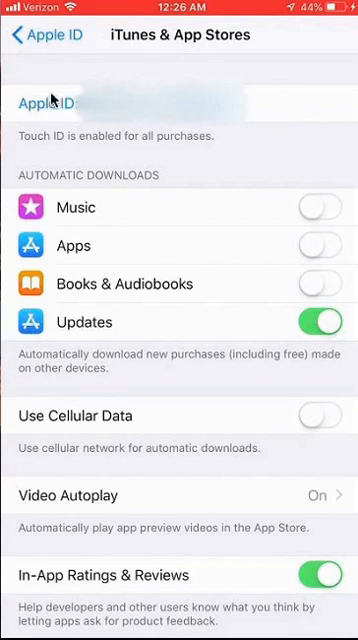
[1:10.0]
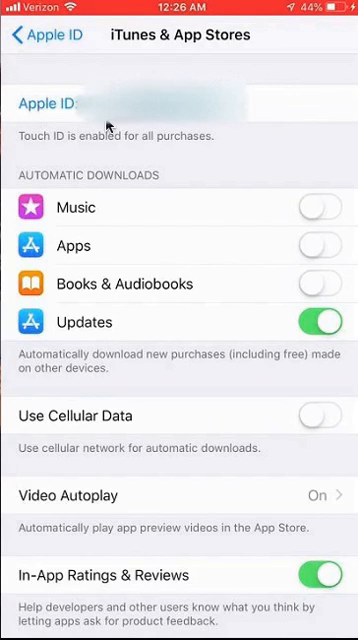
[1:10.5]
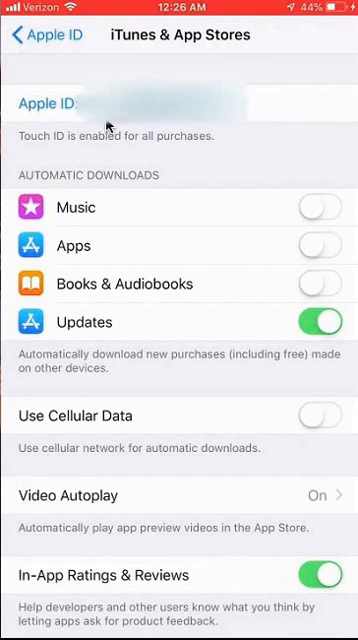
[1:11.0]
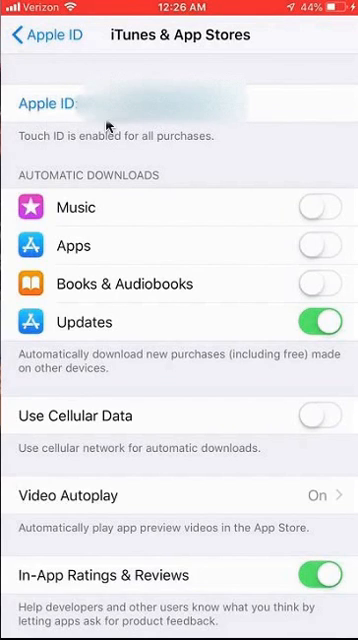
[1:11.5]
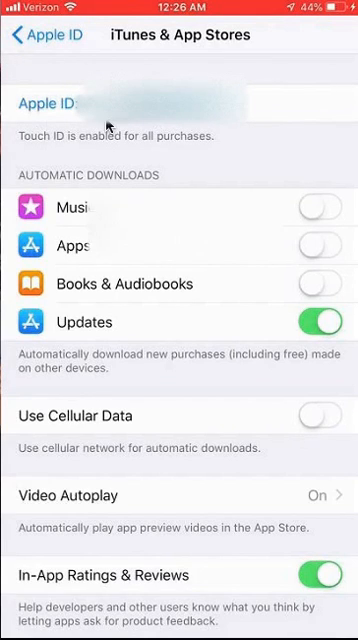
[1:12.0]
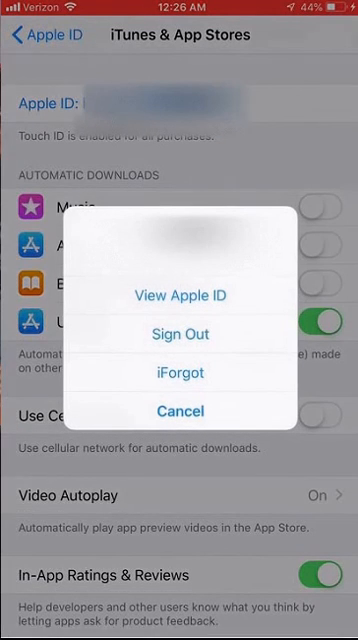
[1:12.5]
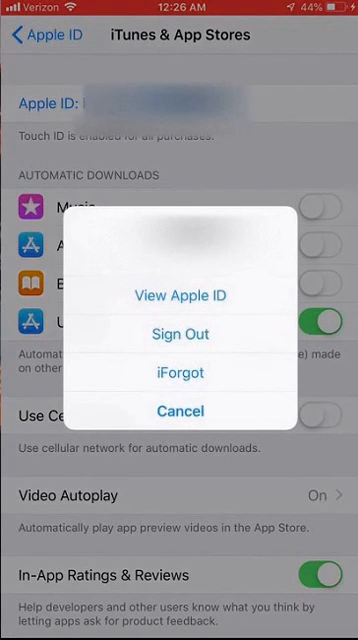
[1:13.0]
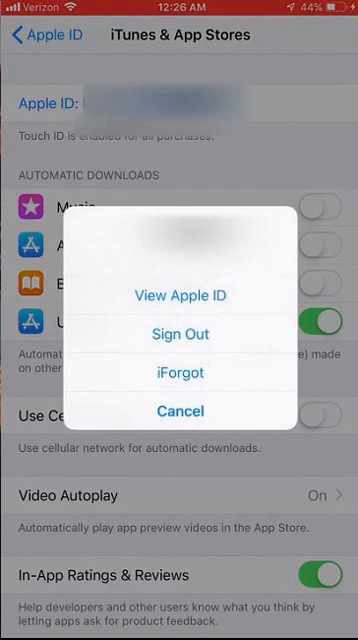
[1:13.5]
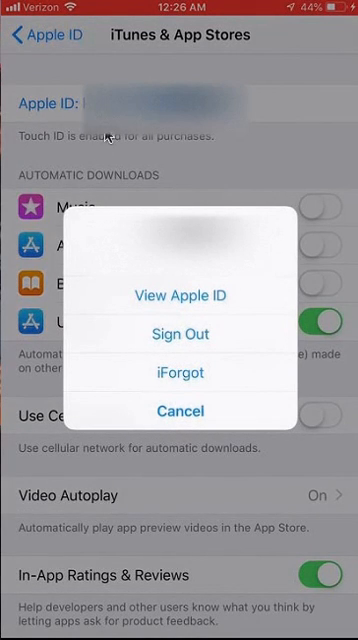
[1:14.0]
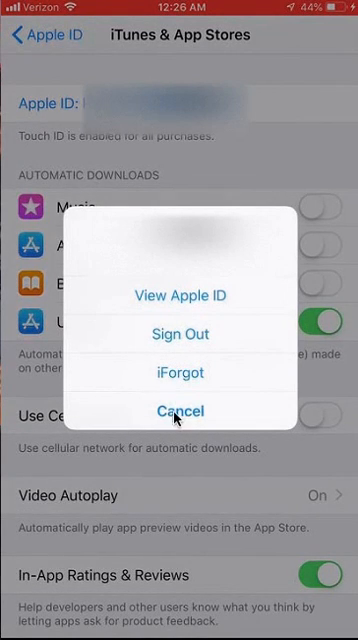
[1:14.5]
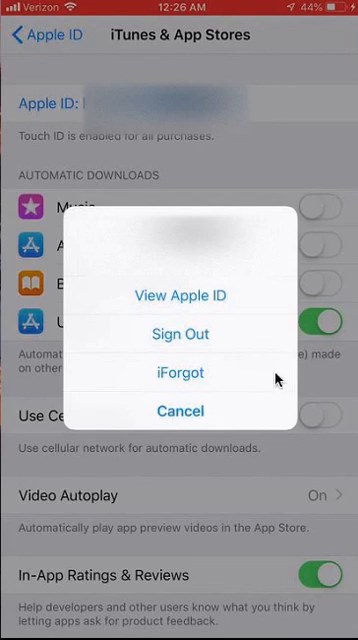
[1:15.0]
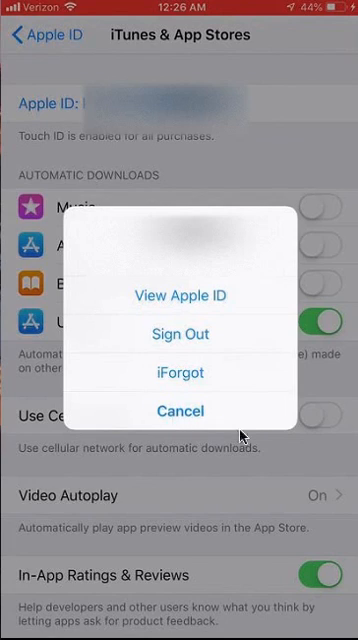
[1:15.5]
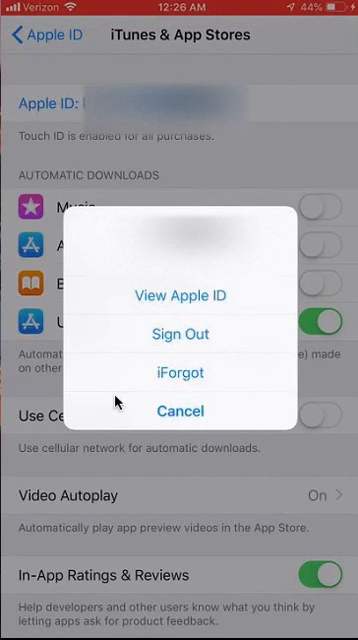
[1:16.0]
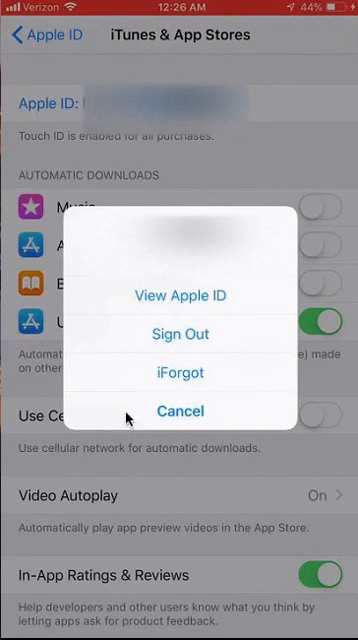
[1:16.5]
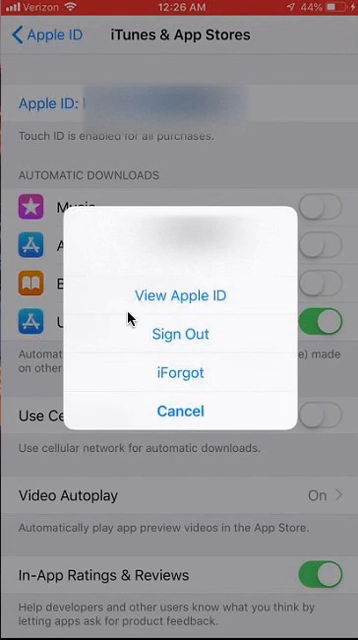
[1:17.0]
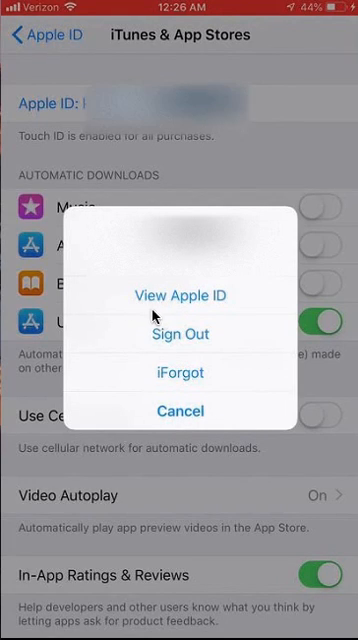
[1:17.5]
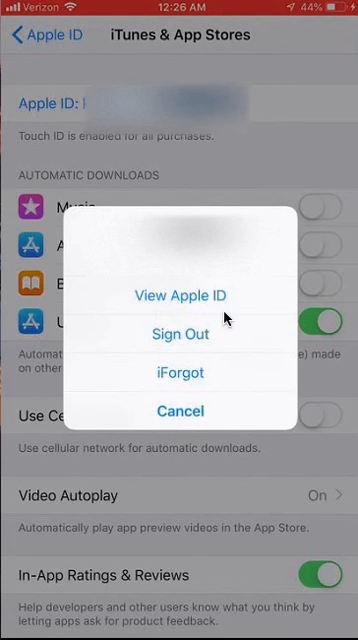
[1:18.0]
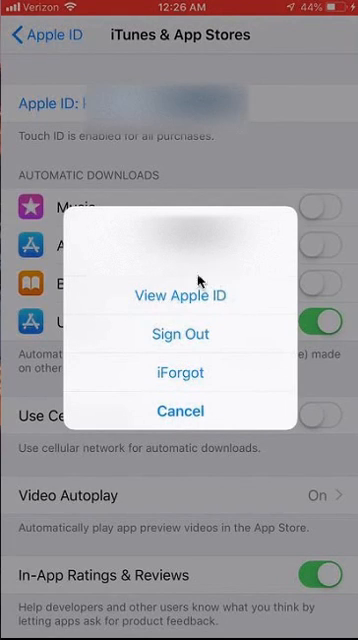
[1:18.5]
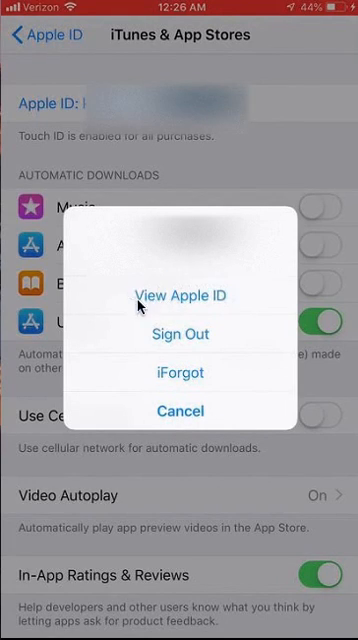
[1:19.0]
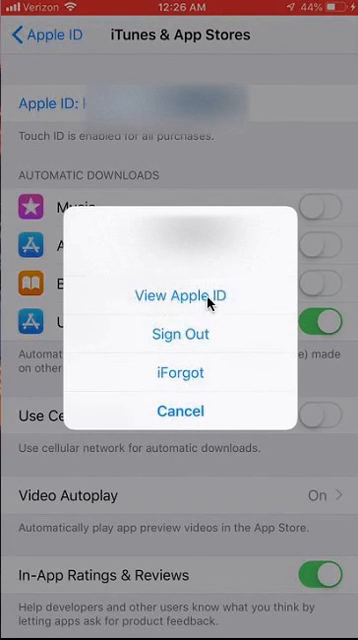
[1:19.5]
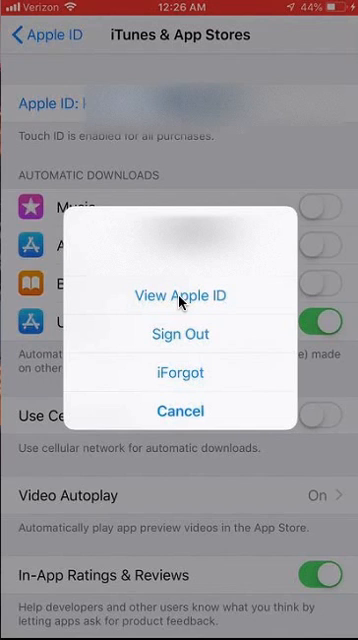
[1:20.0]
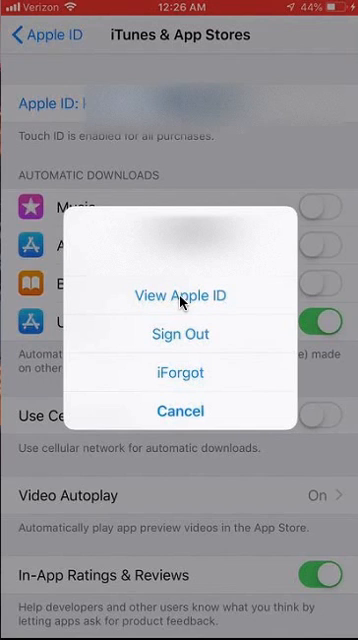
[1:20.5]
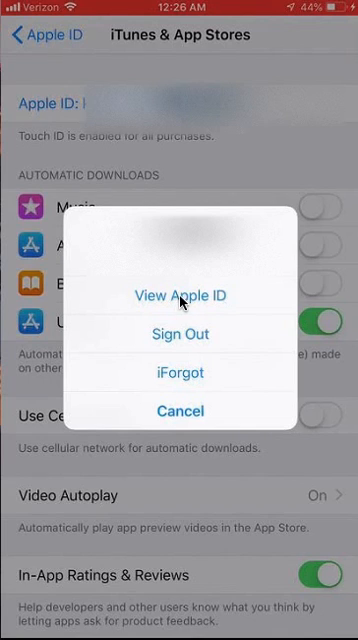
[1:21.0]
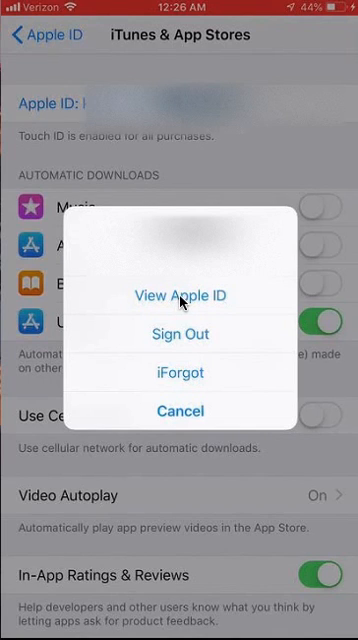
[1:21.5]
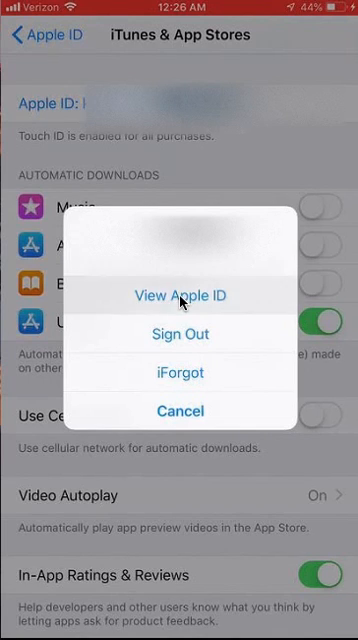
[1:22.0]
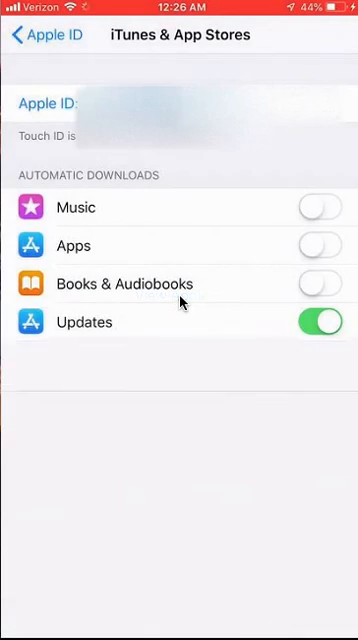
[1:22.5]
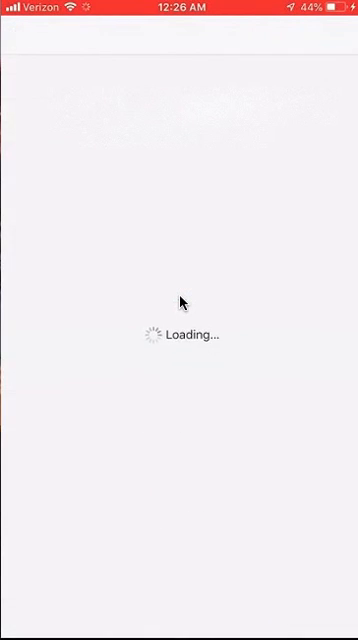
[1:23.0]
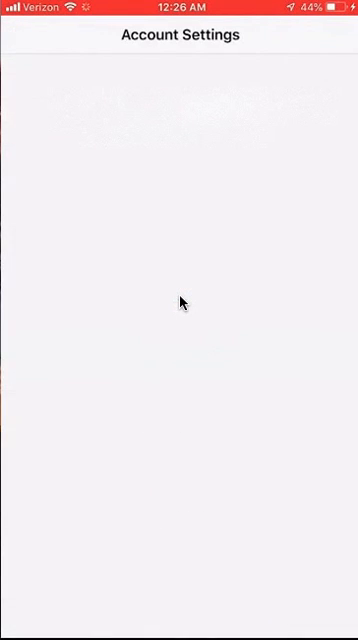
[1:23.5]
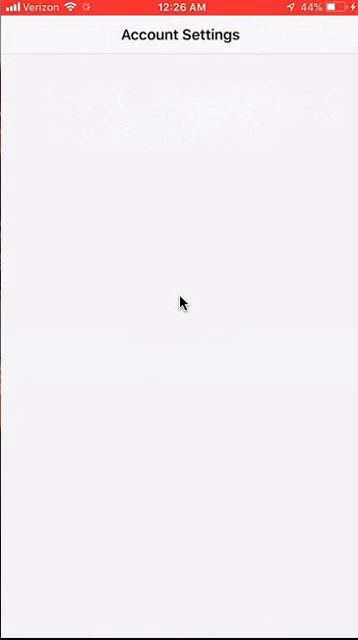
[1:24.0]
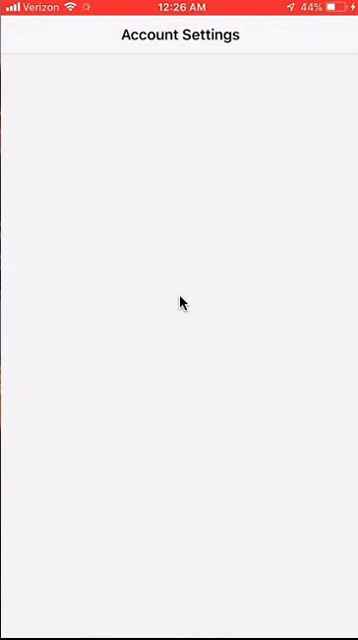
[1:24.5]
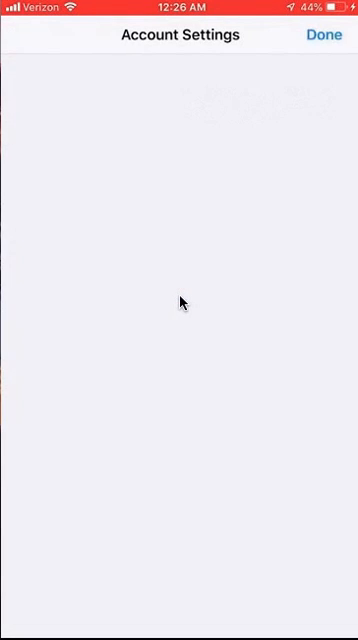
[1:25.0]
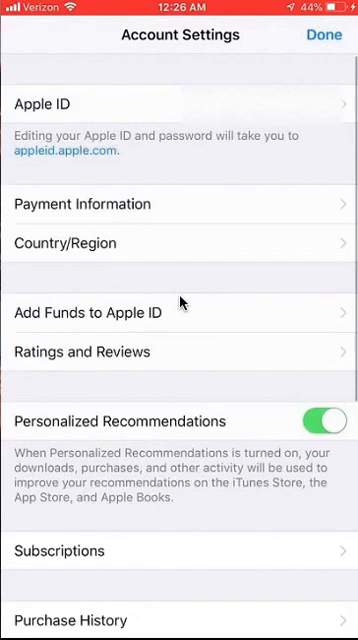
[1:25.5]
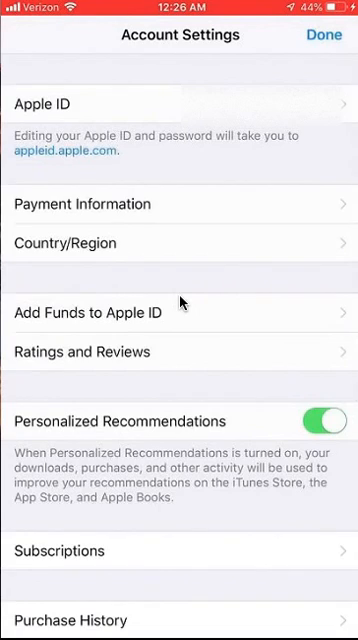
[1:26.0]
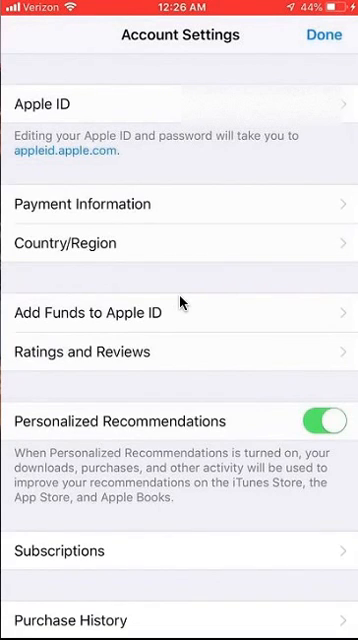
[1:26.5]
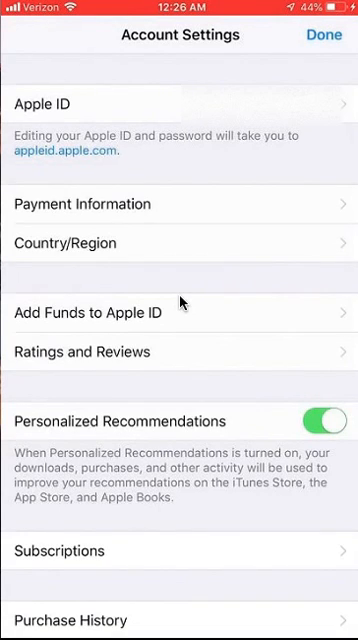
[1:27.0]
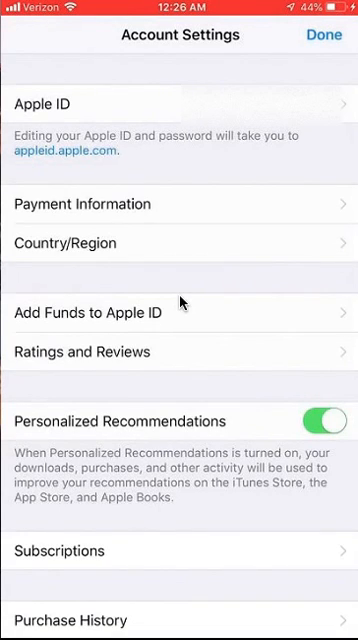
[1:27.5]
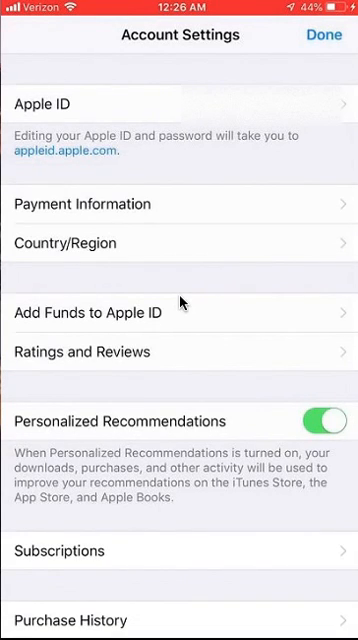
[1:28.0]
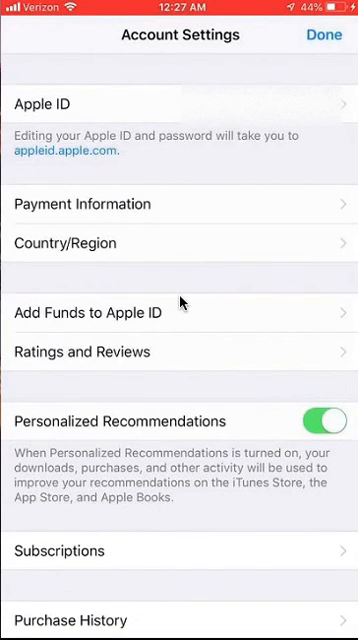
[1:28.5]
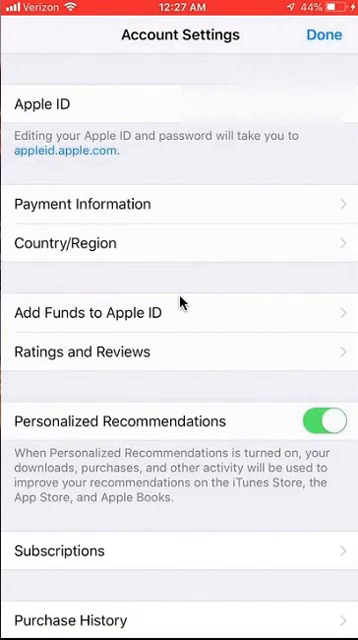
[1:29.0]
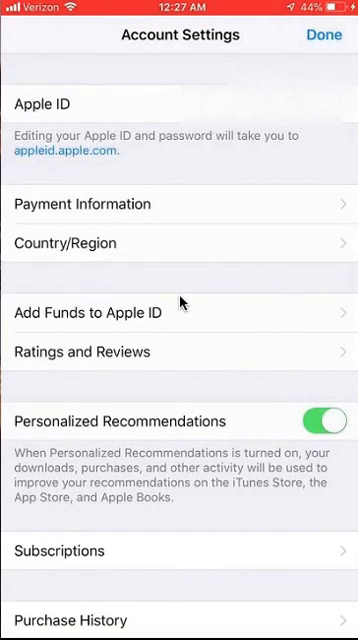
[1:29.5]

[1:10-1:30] The person stays on the iTunes and App Store section of the Apple ID settings. The Apple ID is blurred out, and below it the screen states that Touch ID is enabled for all purchases, followed by automatic downloads, music, apps, audiobooks, updates, automatically download new purchases including free made on other devices, use cellular data, video audio play listed as on, automatically play app previews videos in the App Store, and in-app ratings and reviews toggled on. The person hovers around the Apple ID and clicks on it, opening another window with the options view Apple ID, sign out, I forgot and cancel. They hover over view Apple ID and click into it, opening a new window titled Account Settings, which is blank while it loads. It then shows Apple ID, "Editing your Apple ID and password will take you to appleid.com", payment information, country, region, add funds to Apple ID, ratings and reviews, and personalized recommendations.